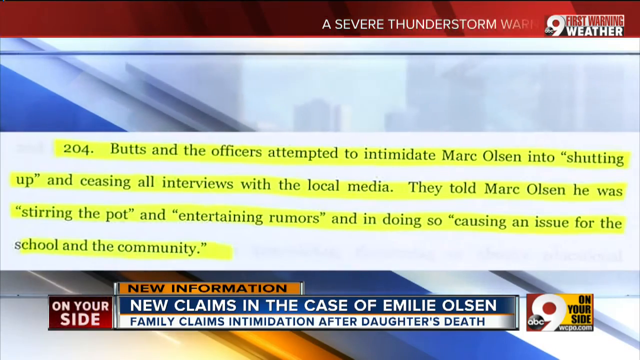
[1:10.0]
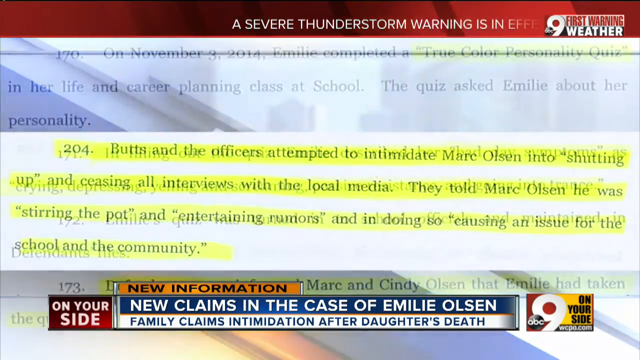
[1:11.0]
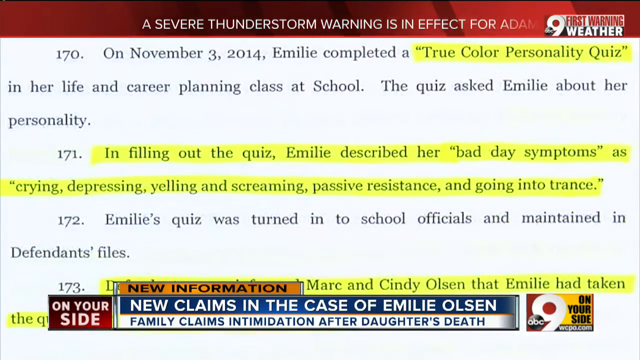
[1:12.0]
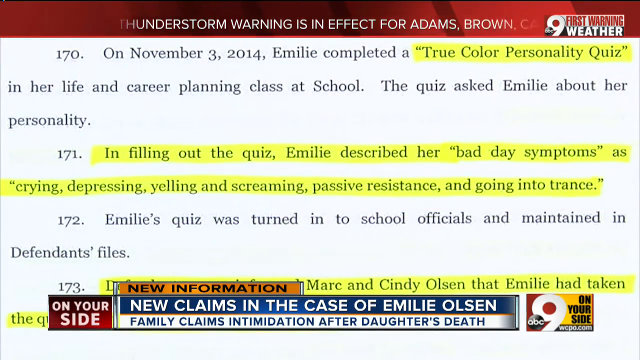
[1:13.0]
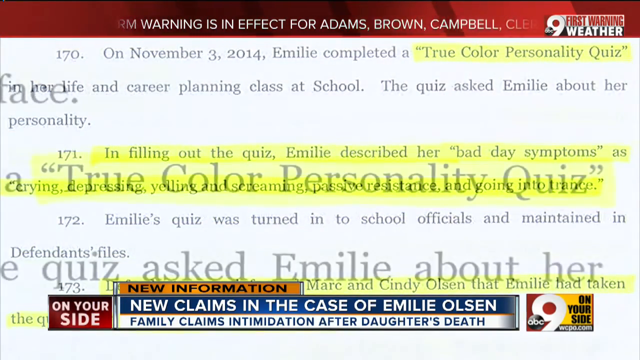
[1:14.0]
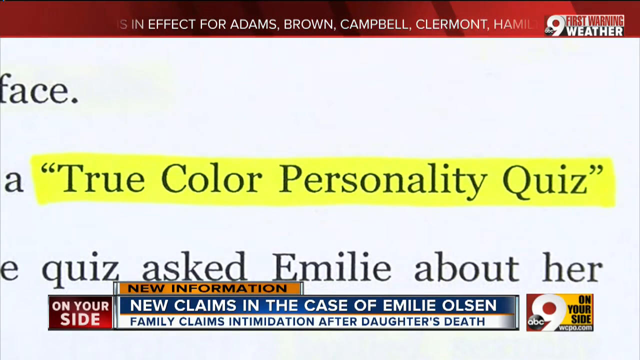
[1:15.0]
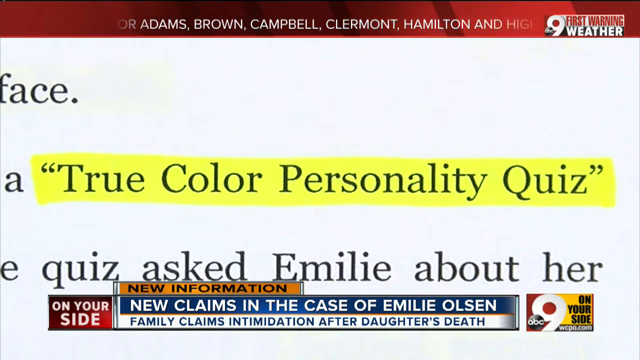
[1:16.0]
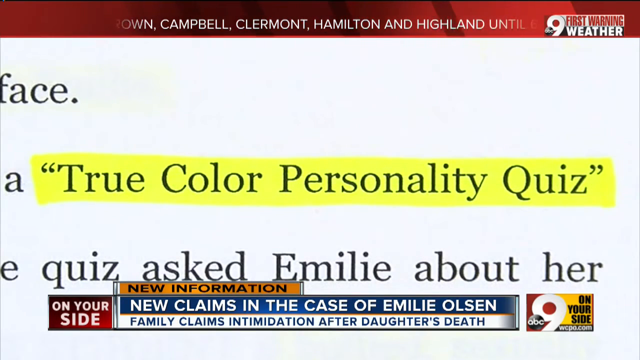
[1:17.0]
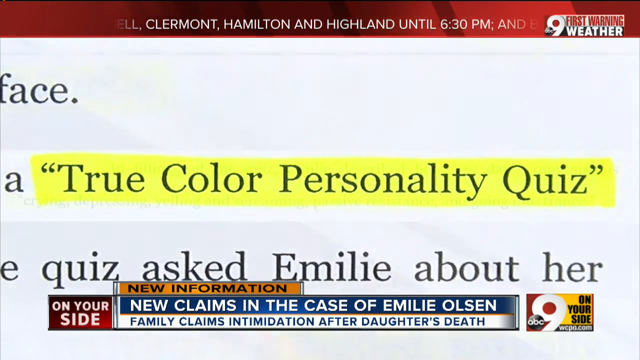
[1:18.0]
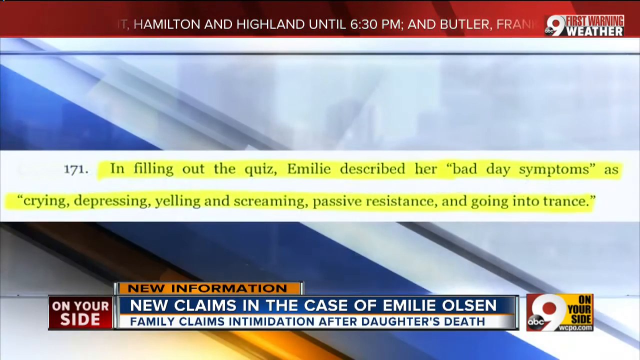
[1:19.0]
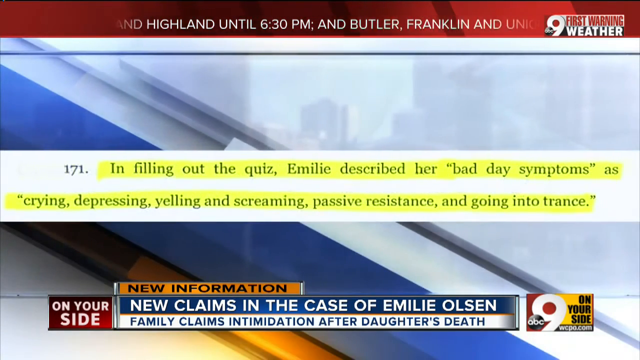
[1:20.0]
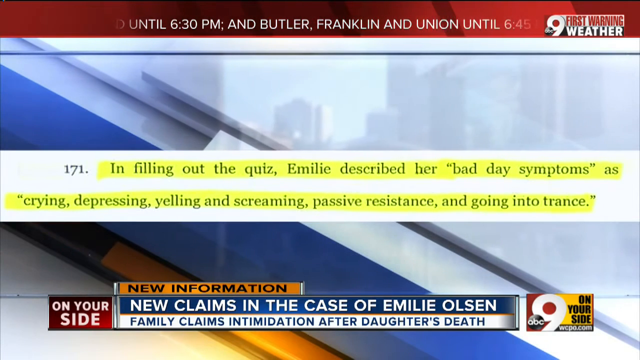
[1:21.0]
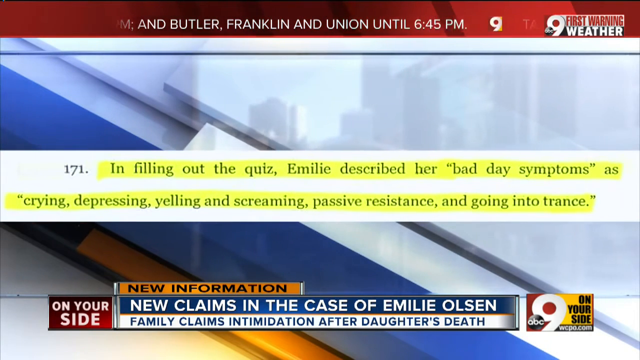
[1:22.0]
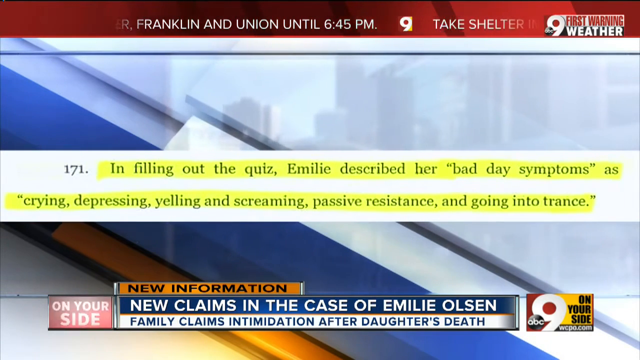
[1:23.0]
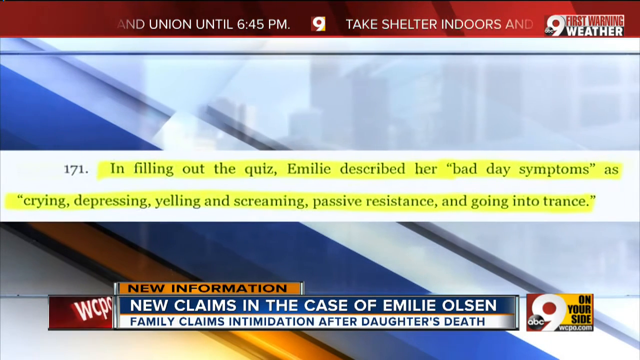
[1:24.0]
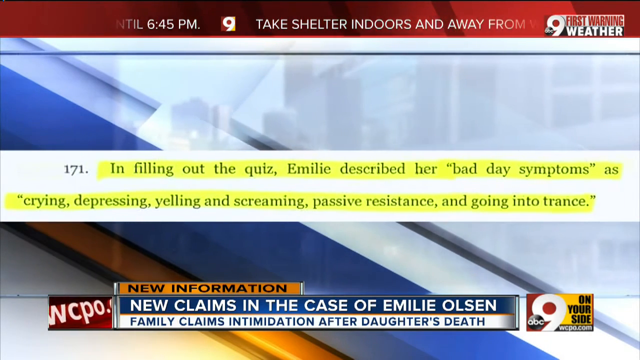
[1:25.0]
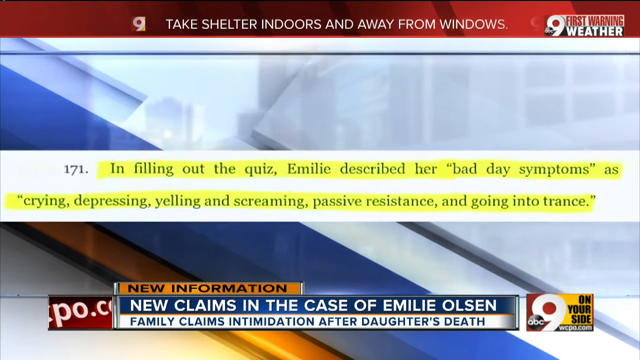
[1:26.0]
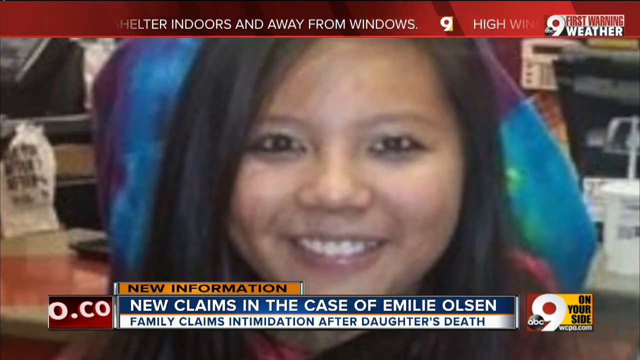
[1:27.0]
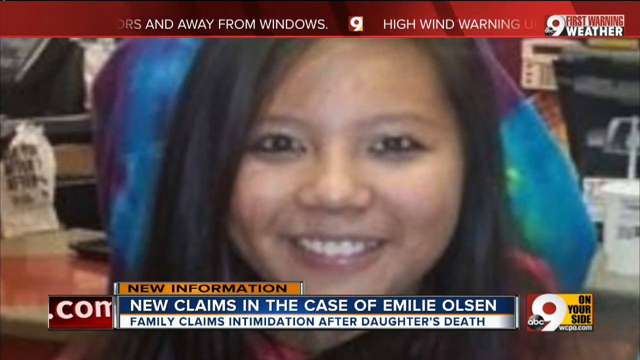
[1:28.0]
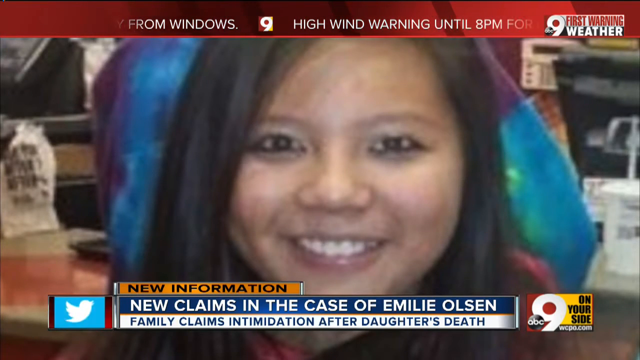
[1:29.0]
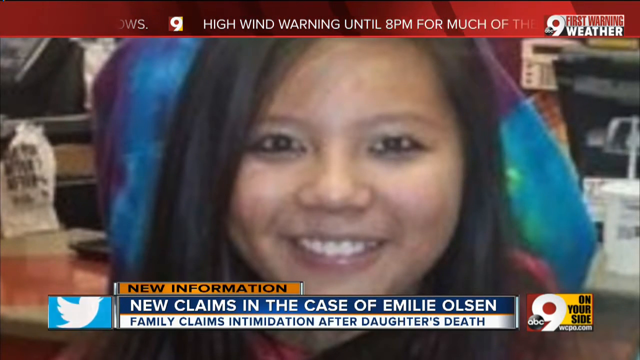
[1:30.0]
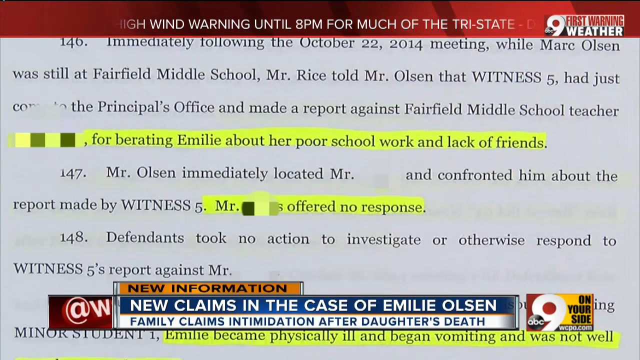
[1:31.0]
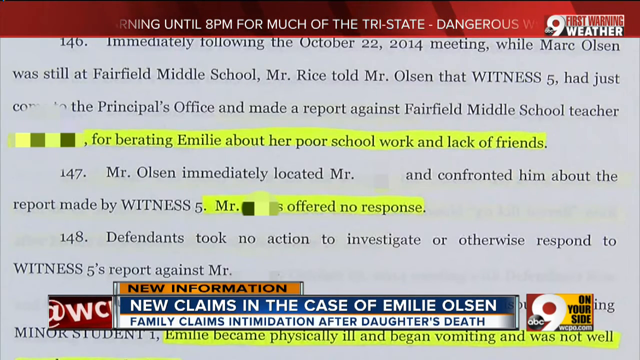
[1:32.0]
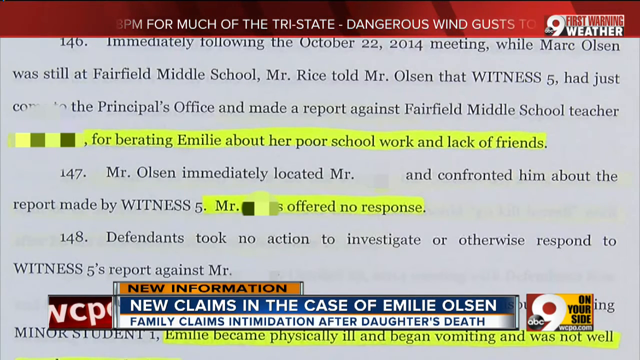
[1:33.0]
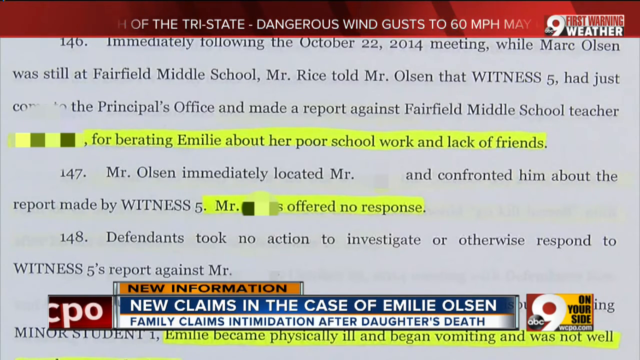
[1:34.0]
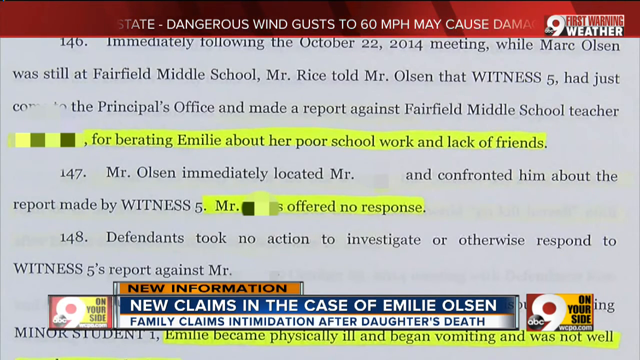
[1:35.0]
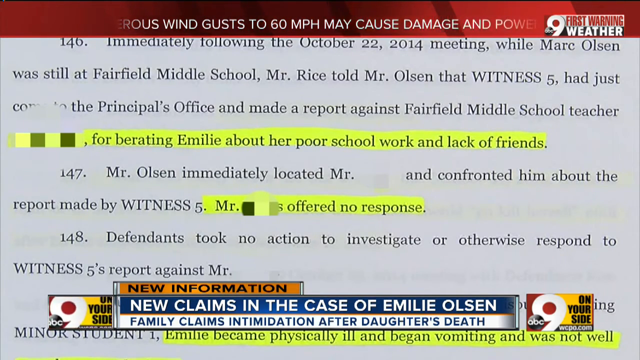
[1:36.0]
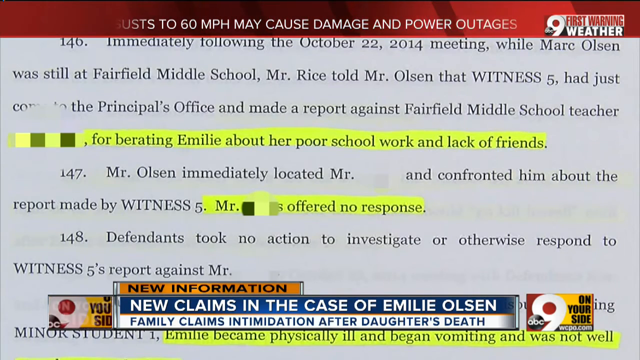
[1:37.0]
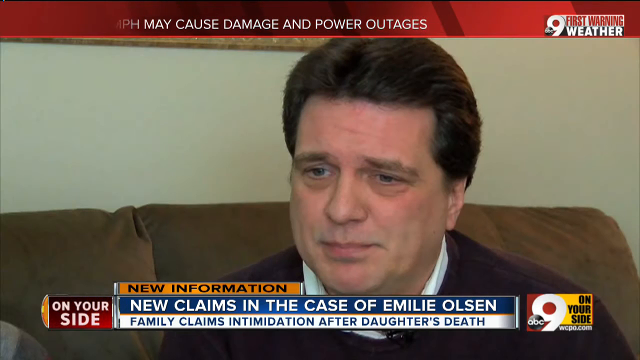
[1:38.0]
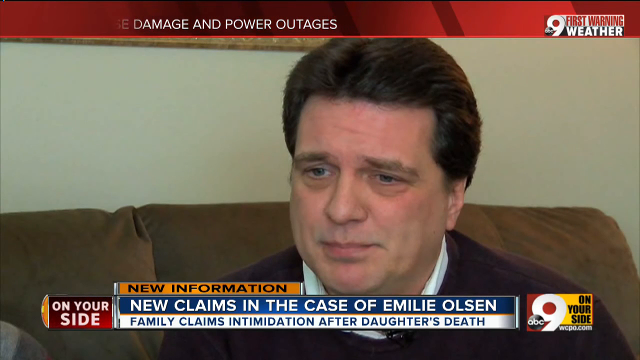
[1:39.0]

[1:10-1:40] More text appears on screen, reading "on November 3rd Emily completed the true color personality quiz in her life and career planning class at school. The quiz asked Amelia about her personality" and "in filling out the quiz Amelia described her bad day symptoms as crying, depression, yelling, screaming, passive resistance, etc." The video transitions through a few different screens showing various pieces of highlighted text.